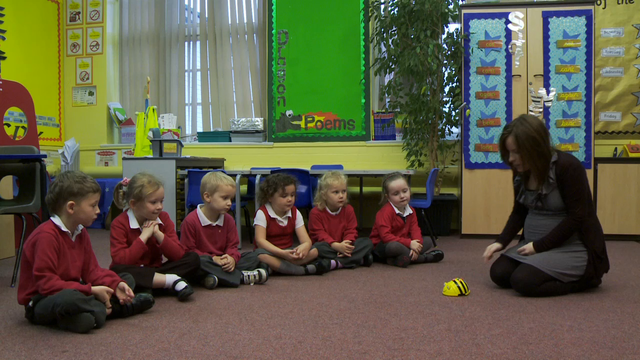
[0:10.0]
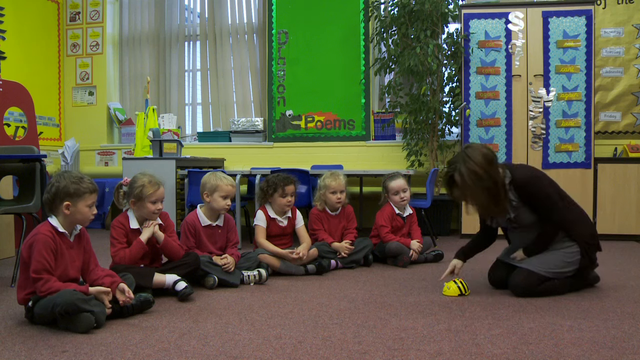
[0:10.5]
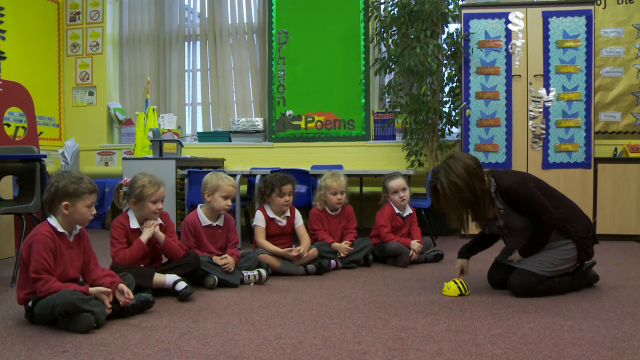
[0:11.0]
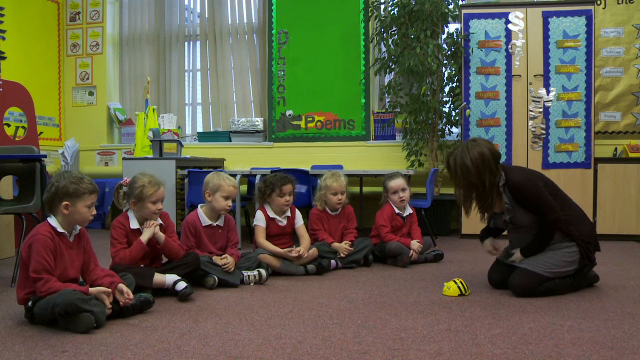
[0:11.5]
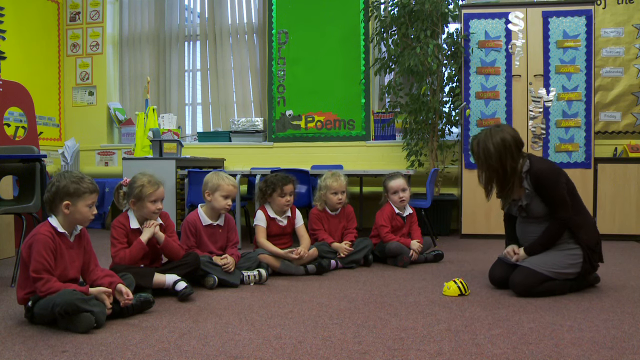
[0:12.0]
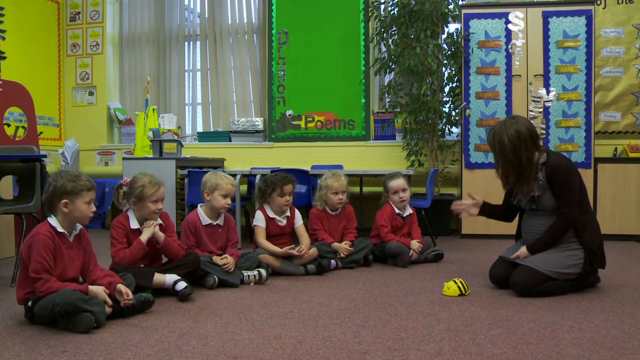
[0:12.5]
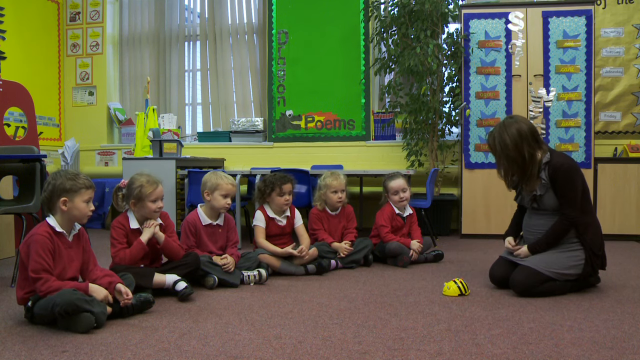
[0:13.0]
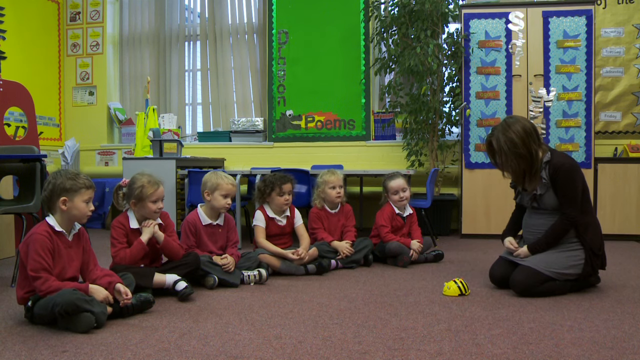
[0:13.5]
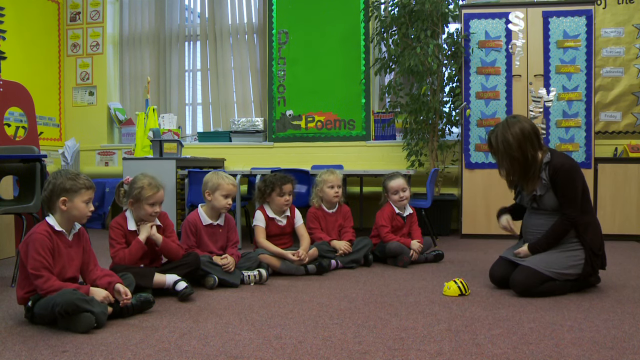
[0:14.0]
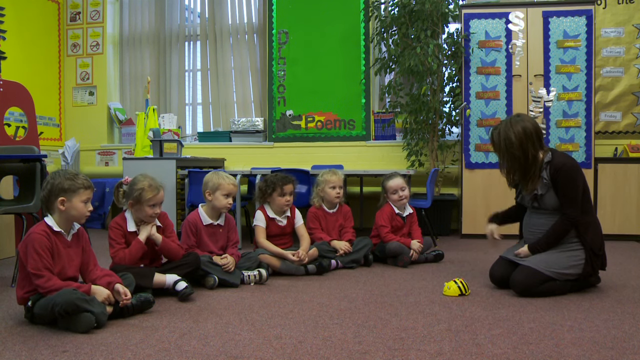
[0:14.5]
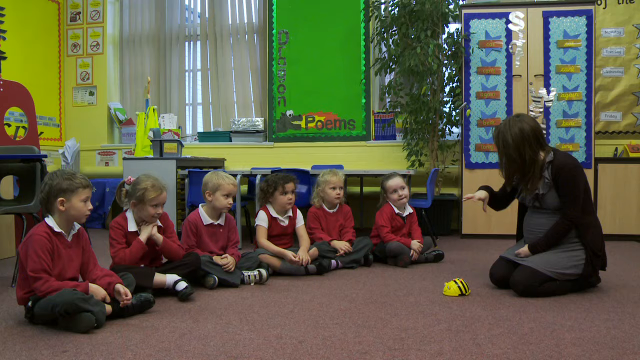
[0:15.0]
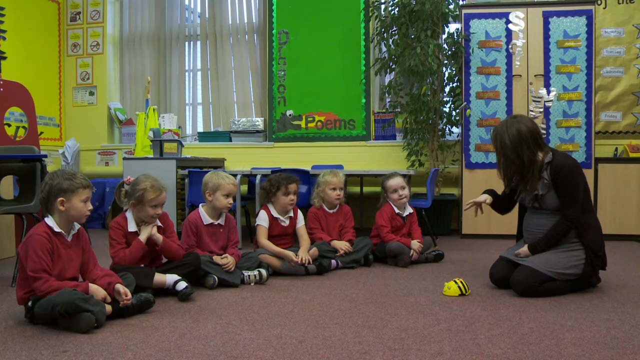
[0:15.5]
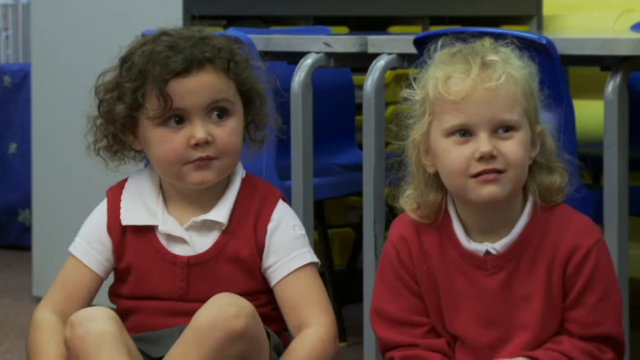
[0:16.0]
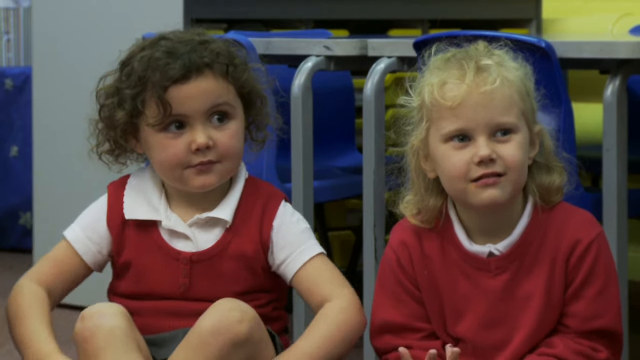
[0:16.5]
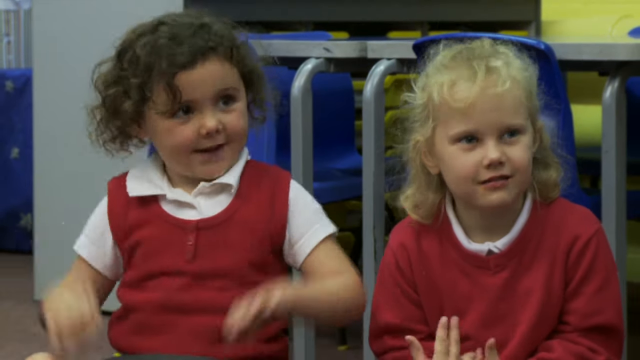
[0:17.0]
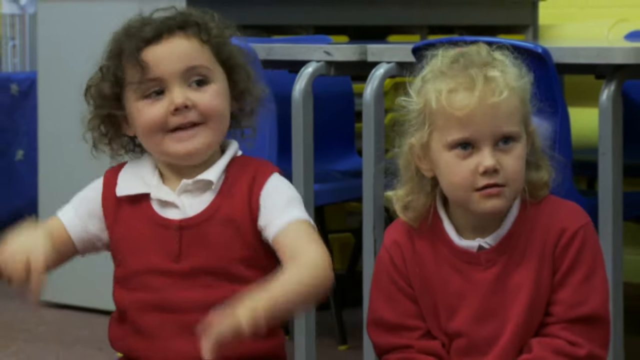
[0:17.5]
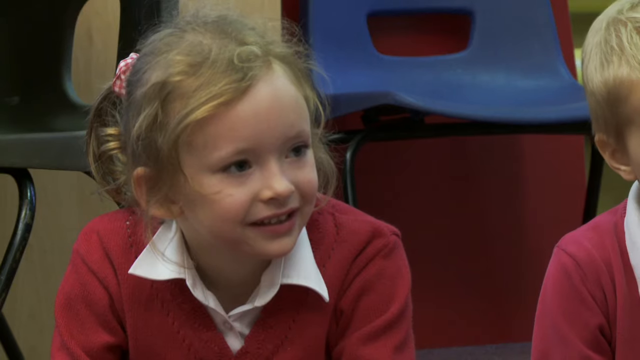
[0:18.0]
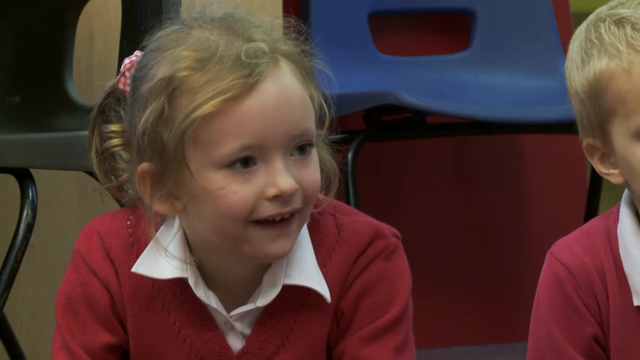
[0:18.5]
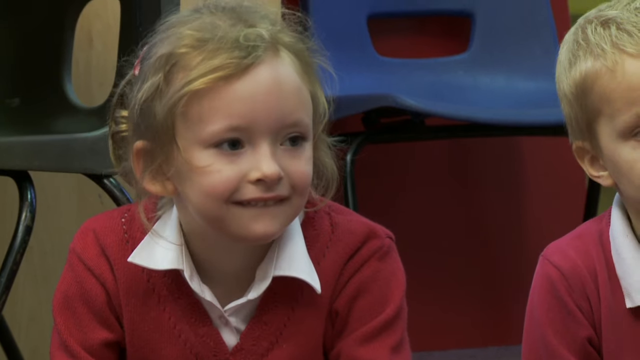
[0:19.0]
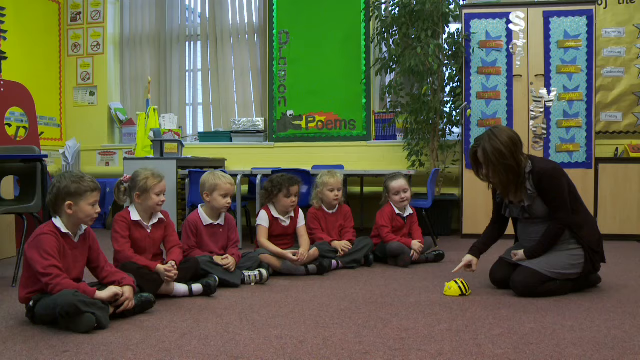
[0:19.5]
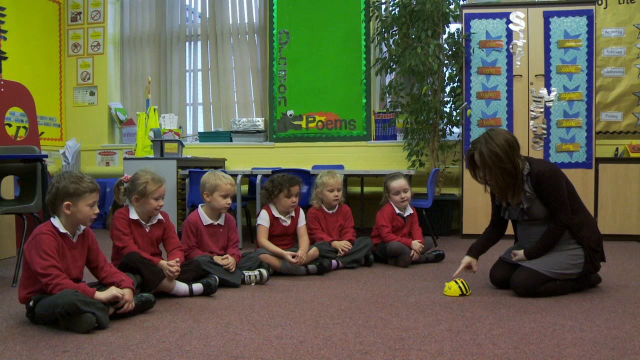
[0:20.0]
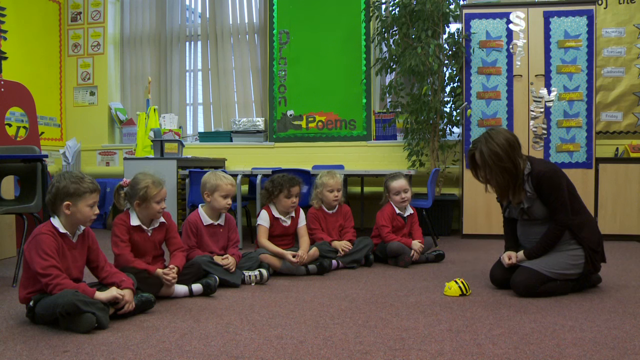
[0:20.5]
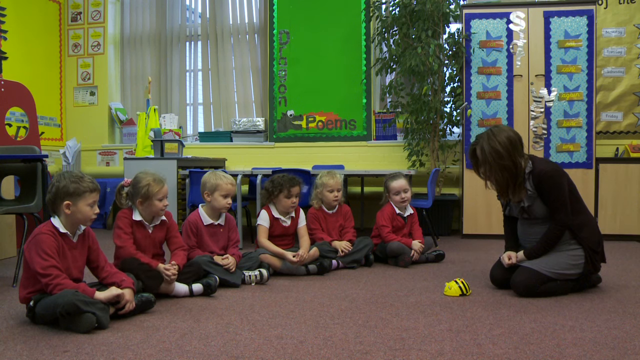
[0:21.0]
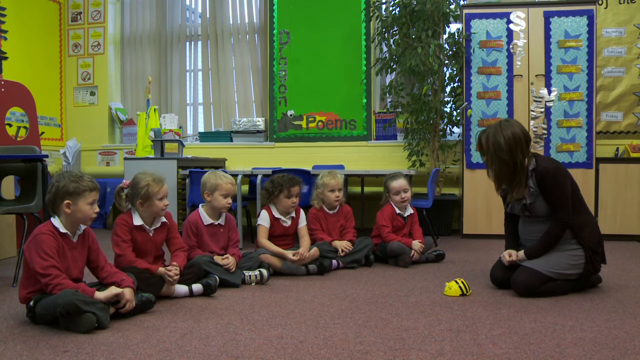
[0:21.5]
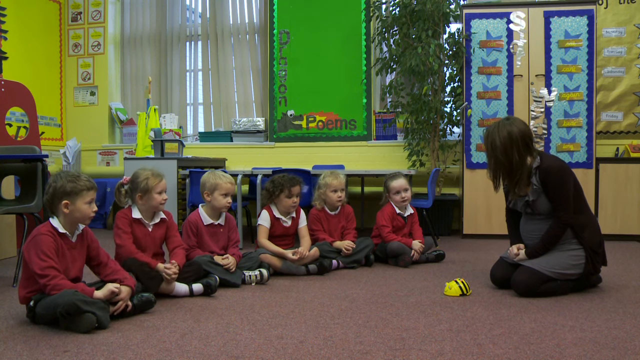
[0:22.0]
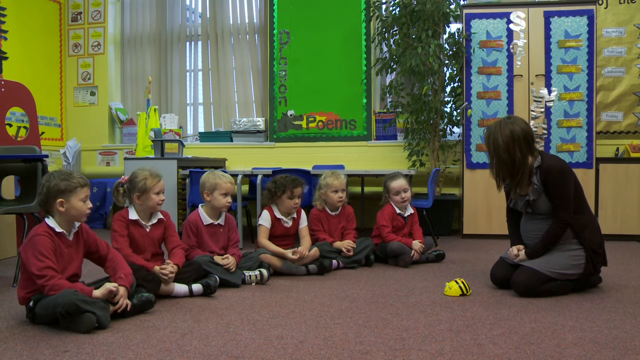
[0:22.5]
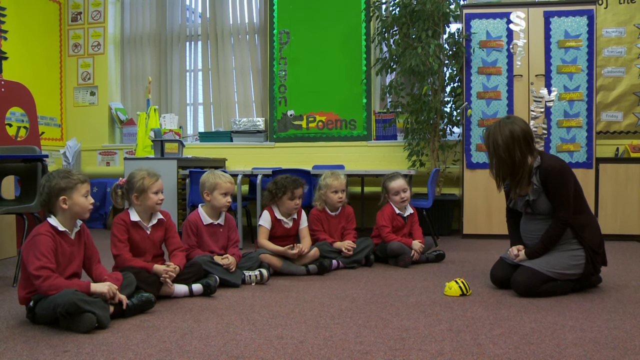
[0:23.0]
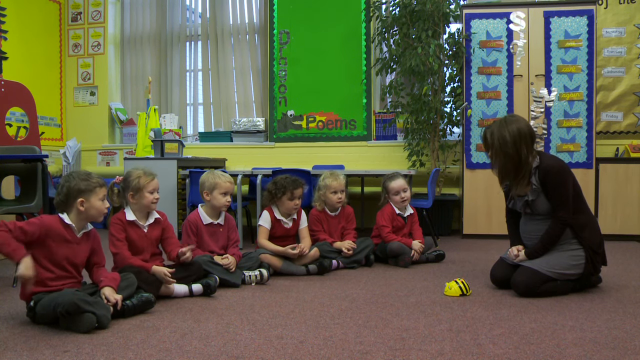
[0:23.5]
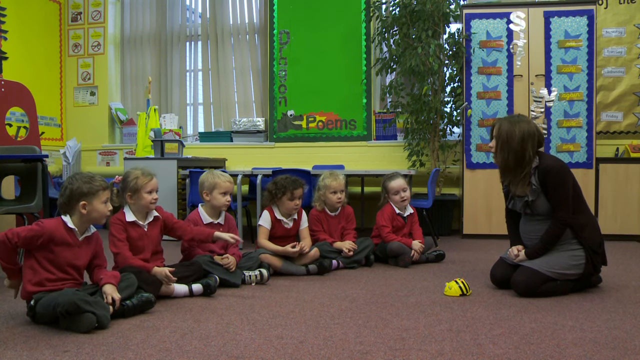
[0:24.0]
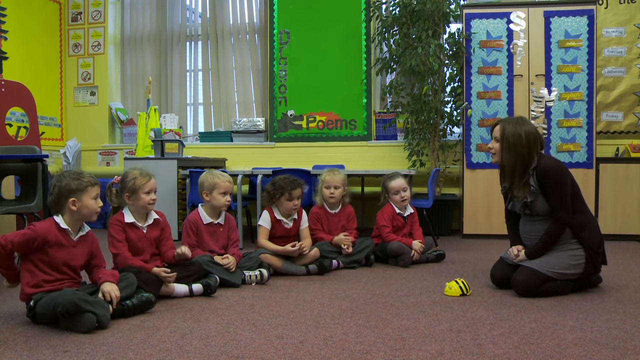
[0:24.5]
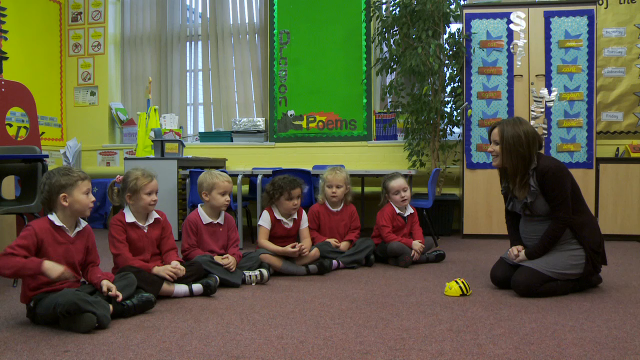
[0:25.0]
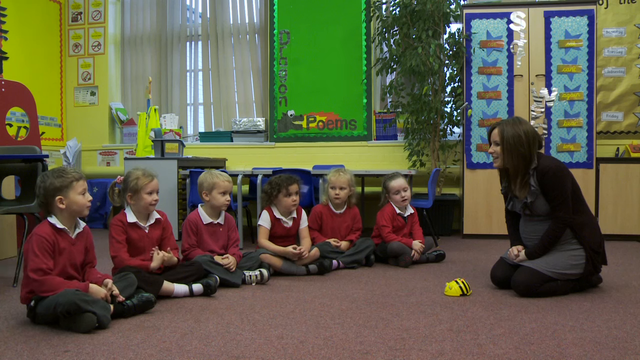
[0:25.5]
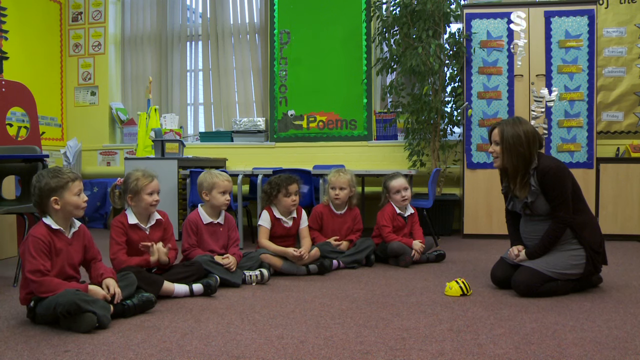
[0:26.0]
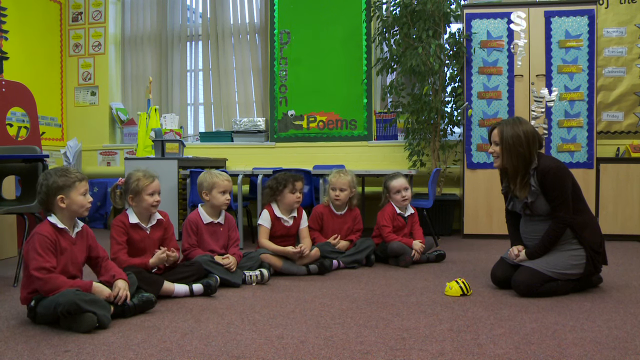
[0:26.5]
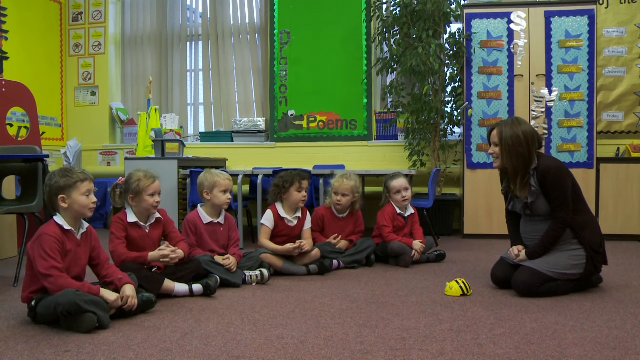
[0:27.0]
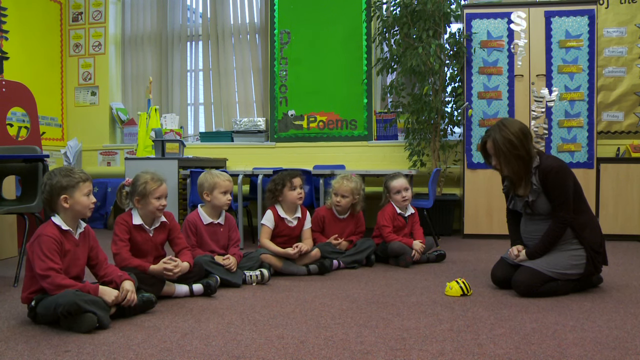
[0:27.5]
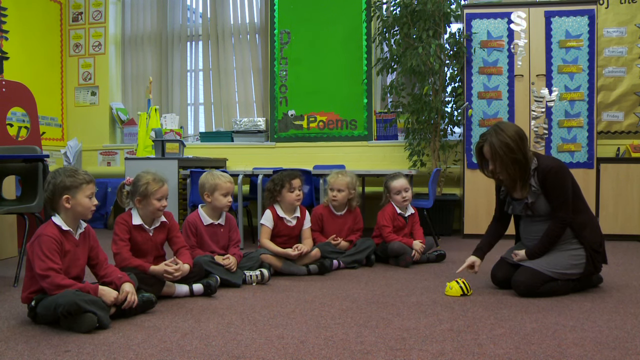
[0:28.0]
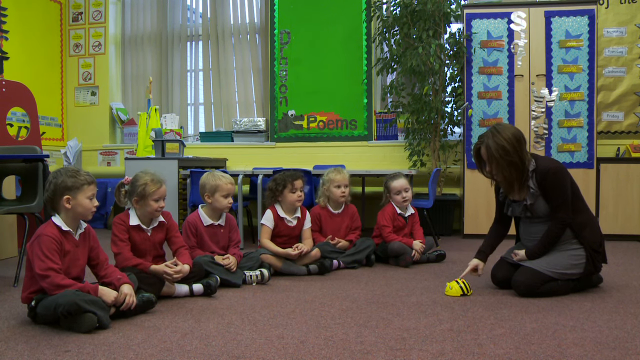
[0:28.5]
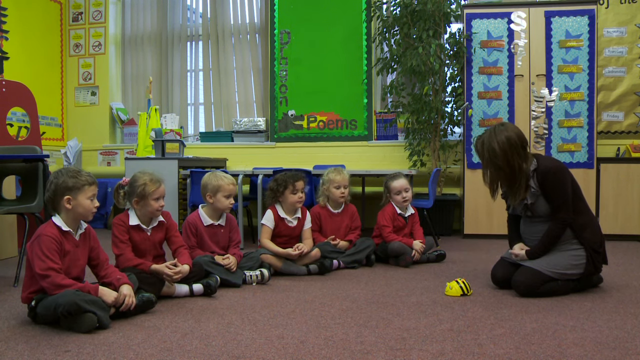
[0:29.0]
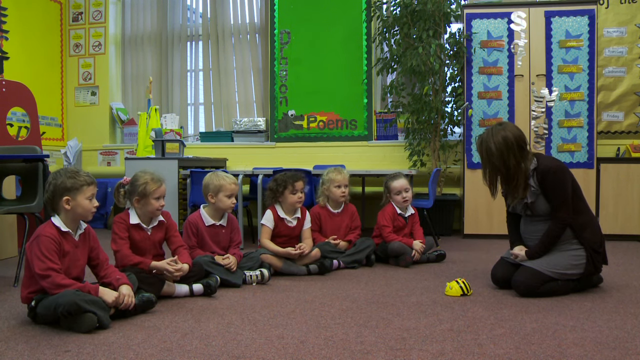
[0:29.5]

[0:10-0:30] The woman continues addressing the children. She has a bee toy laid out in front of her and points to it as she speaks. The camera pans to a close-up of a few of the children, who are smiling and excited, apparently about the toy. One child points to the toy as the woman apparently gives more detail or asks questions. Along the yellow walls are small desks with blue chairs and lighter gray desktops, and decorations, decals and banners cover the walls. There are large windows with white blinds, with a bit of daylight shining through. In the background there is also a gray desk and what appear to be blue storage bins and other items, seemingly arts and crafts. All of the children appear to be Caucasian, with hair ranging from light blonde to light brown to a darker brunette.